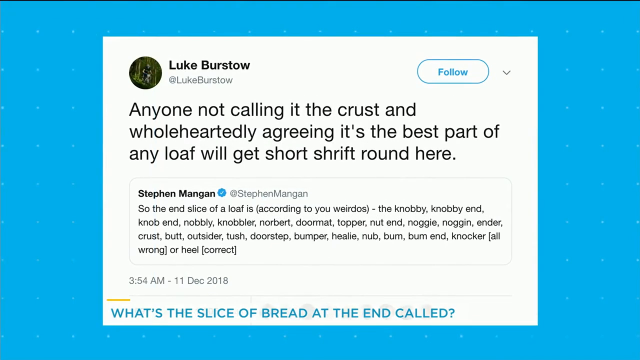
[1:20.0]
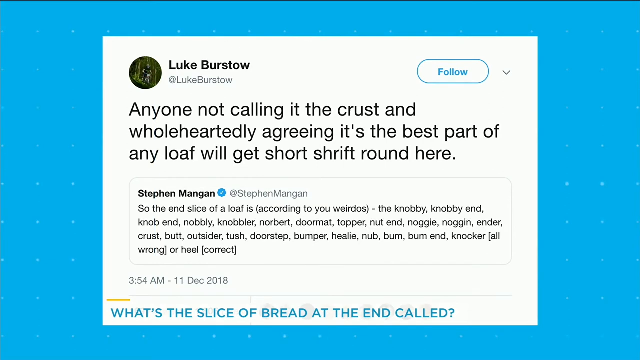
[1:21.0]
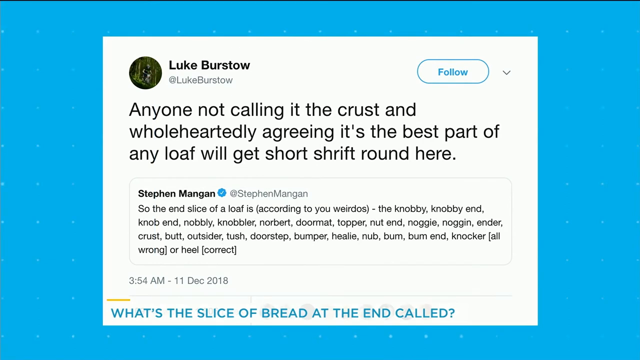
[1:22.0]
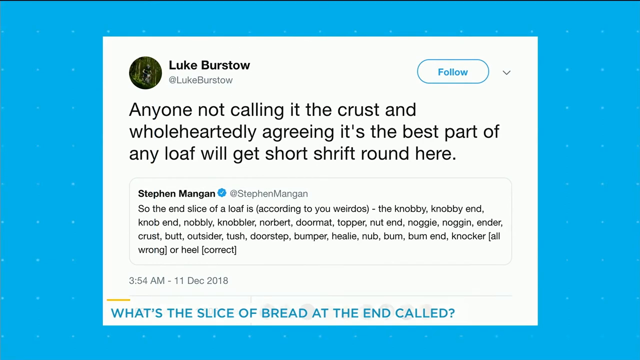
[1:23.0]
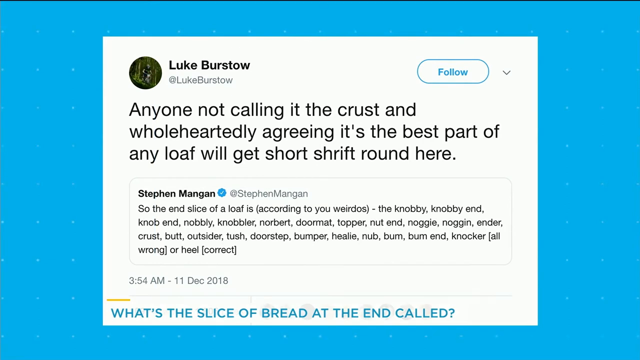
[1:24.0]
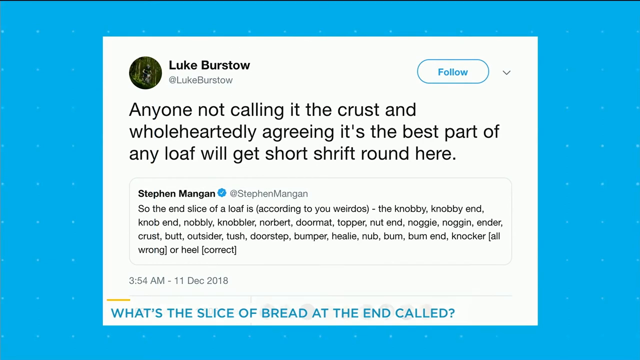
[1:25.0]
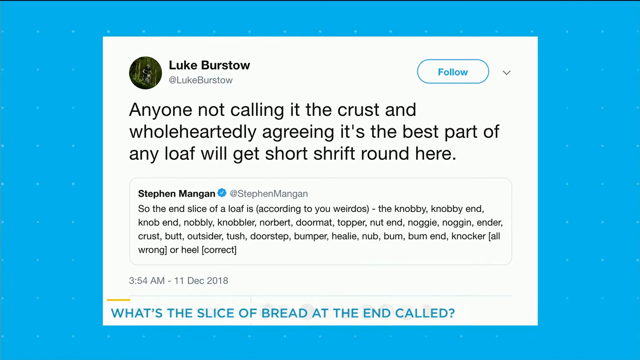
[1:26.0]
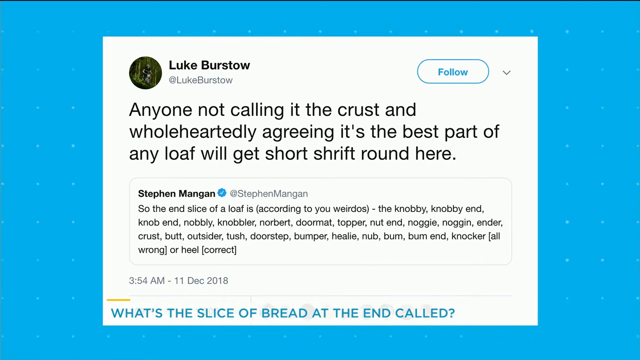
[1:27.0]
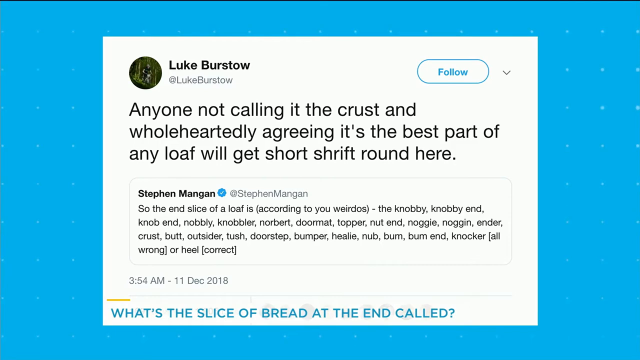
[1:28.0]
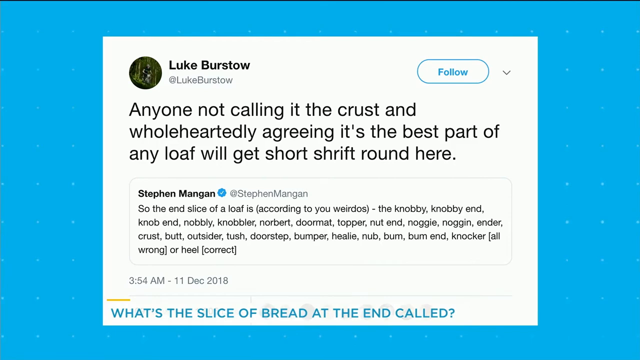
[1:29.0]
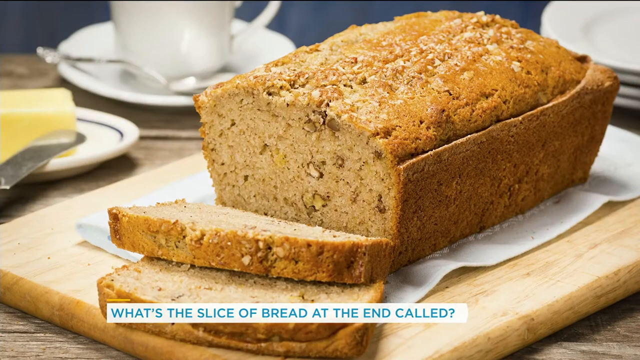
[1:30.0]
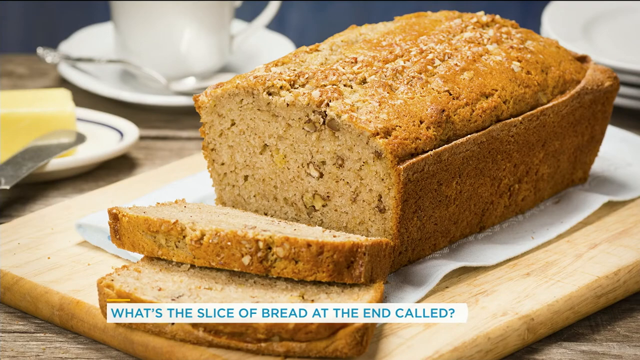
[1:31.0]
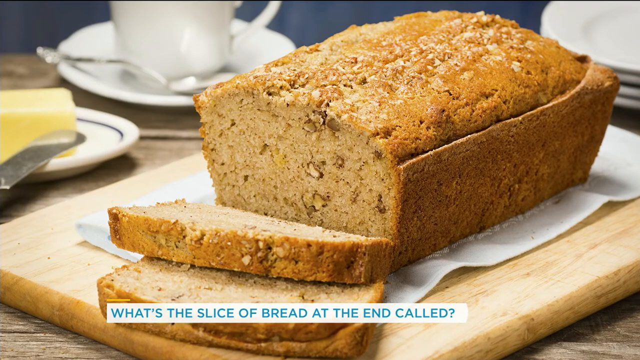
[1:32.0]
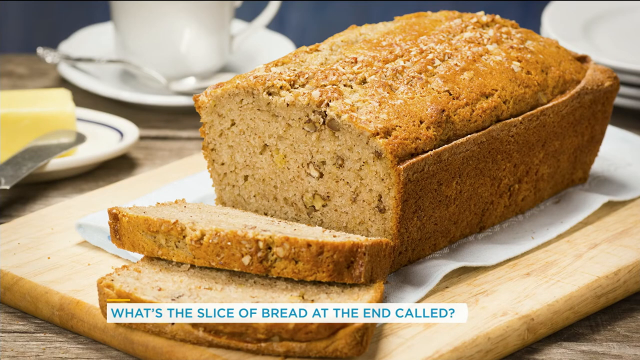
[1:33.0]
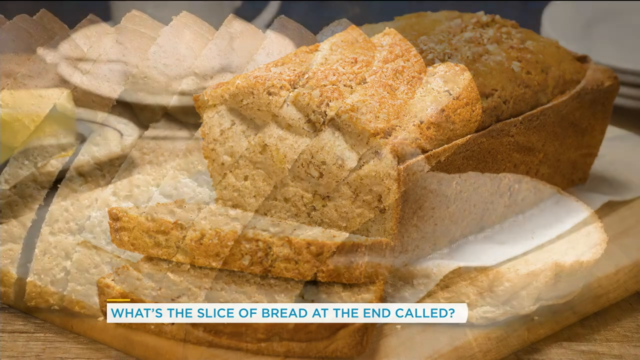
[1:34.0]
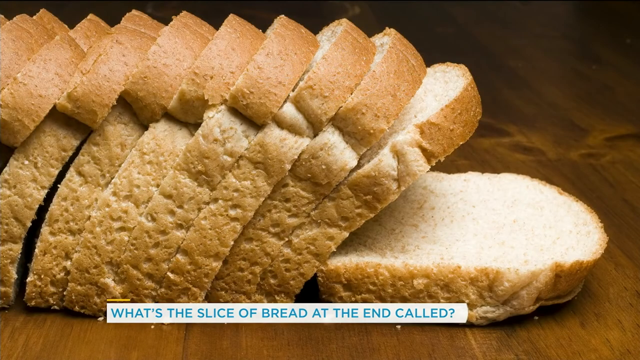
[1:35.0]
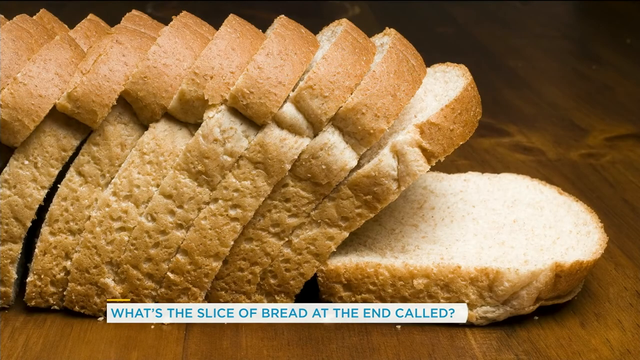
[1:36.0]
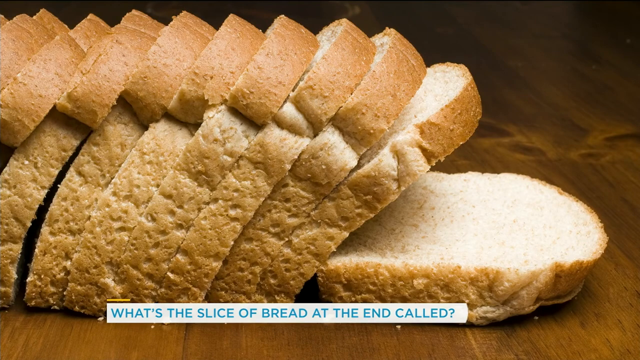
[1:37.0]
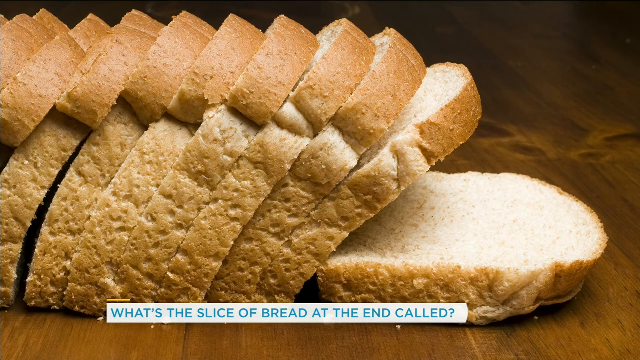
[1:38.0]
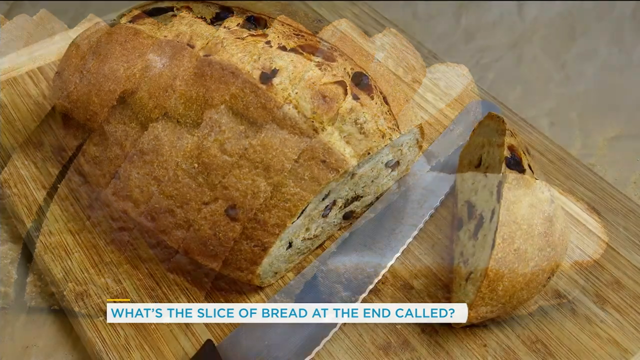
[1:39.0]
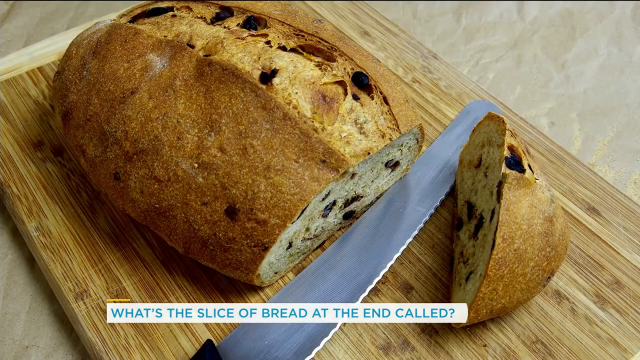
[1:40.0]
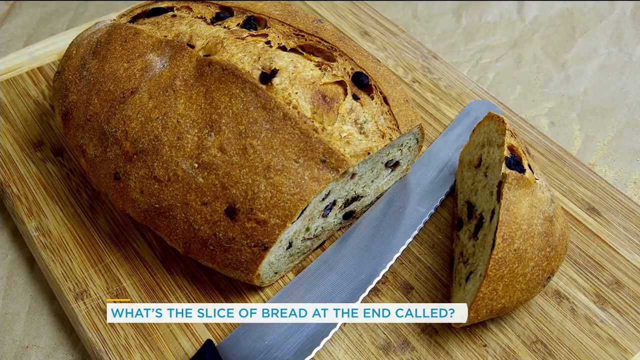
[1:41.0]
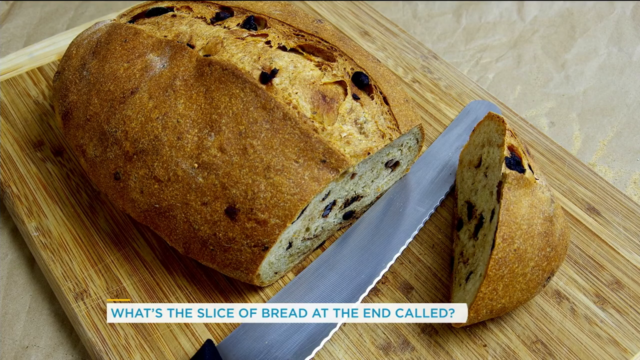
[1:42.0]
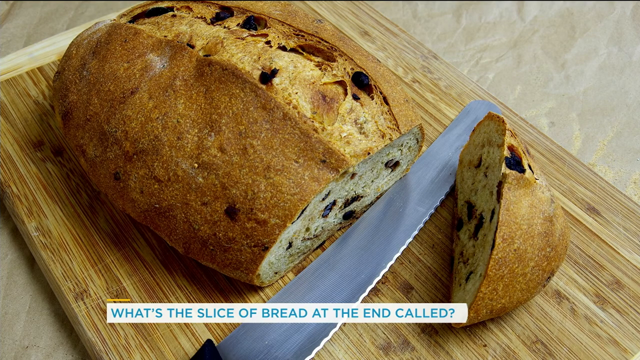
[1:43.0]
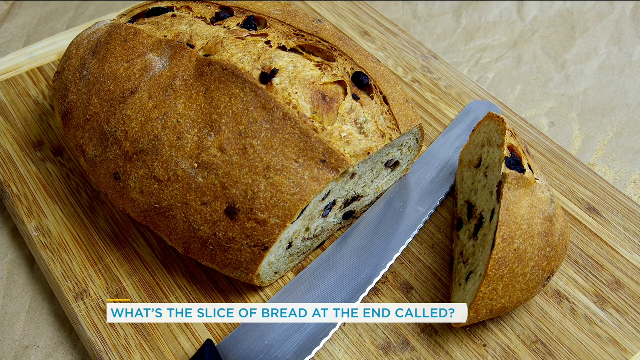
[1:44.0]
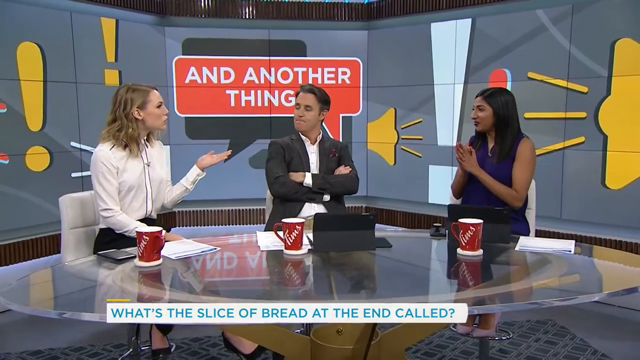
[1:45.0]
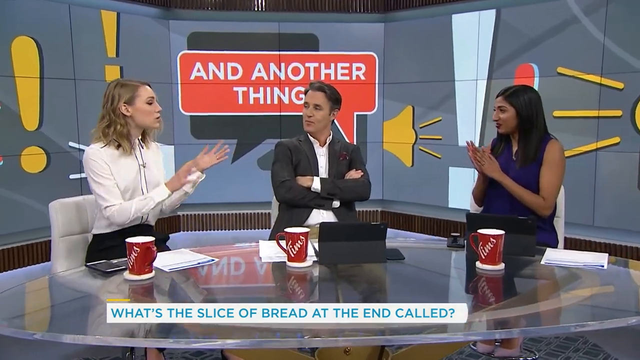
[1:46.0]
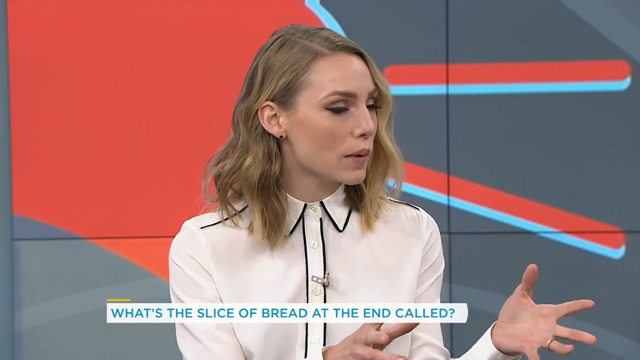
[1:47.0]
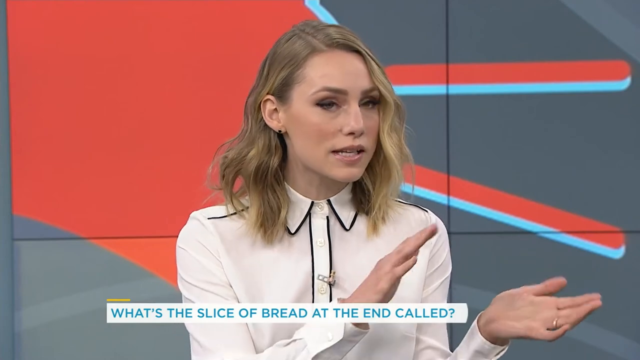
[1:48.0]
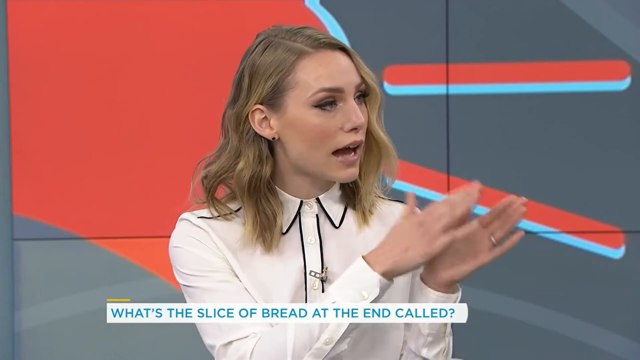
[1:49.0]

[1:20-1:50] A post from Luke Burkstow begins "anybody not calling it the crest" and says the person will get short shrift. At the top is a Follow button, white with a blue border and blue text, and to the right there is a gray dropdown option. Underneath the name is the handle "@Lukeburkstow" in gray, written as one word. Right beneath it, a thin gray bordered box contains Stephen's original message, with the time 3:54, December 11th. Text at the bottom again begins "What's the slice of the bread". The video then shows what looks like banana bread with a couple of pieces cut off the end, with nuts visible and a napkin underneath, apparently on a butcher block. There is tea or a mug of some kind with its top cut off from view, on a white dish with a spoon. A stick of butter with a butter knife is on the left, and a stack of plates is at the top right. The same sliced loaf is shown, with the slices in a domino-like arrangement, followed by what looks like raisin bread with a butcher knife in the middle and only the end cut off. The video then returns to the woman in white, who is talking.